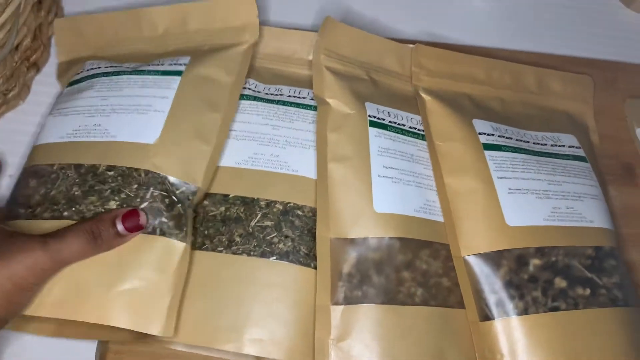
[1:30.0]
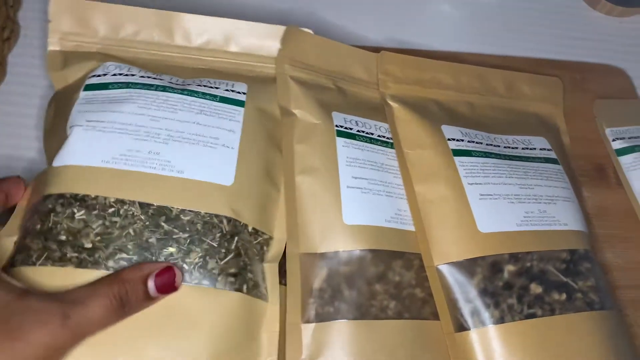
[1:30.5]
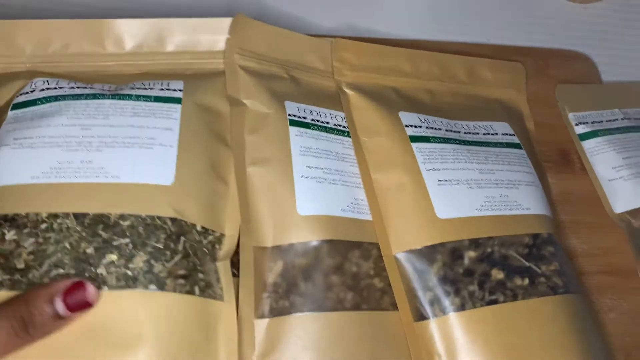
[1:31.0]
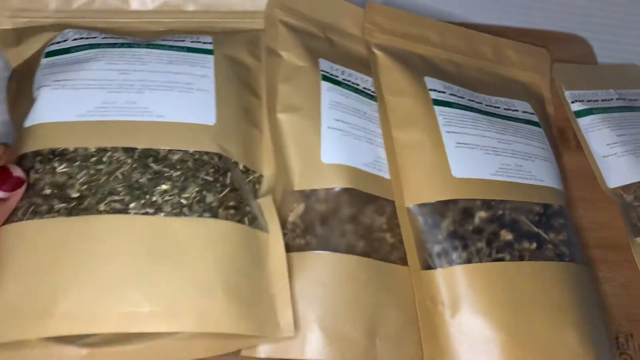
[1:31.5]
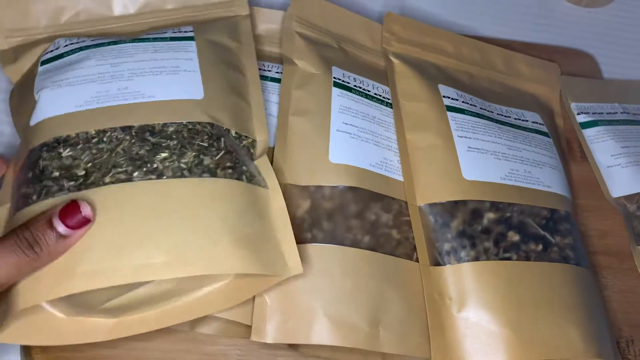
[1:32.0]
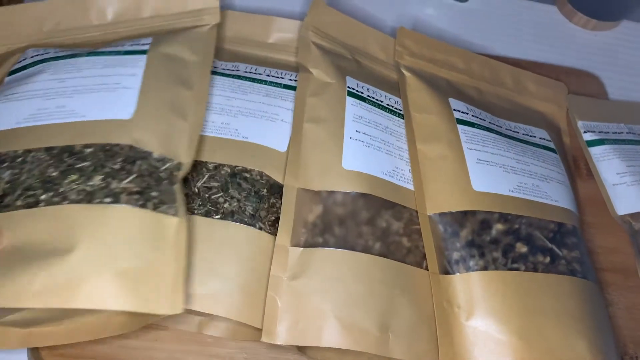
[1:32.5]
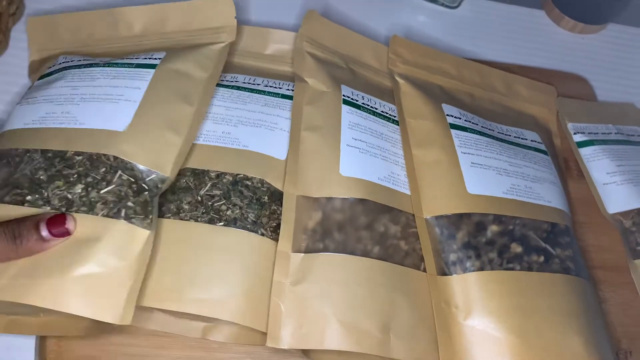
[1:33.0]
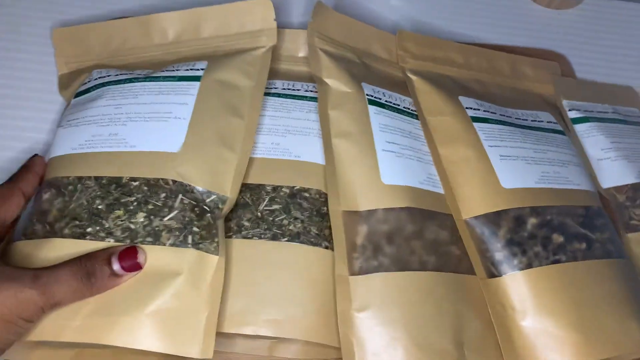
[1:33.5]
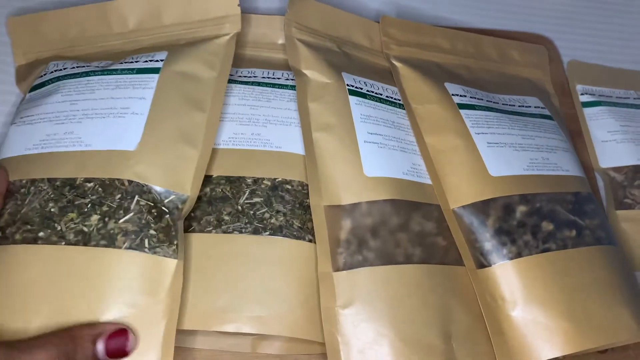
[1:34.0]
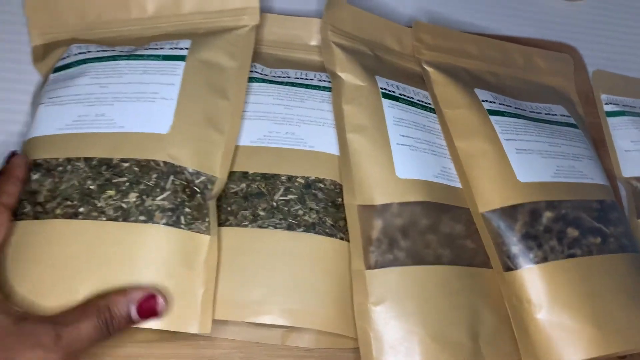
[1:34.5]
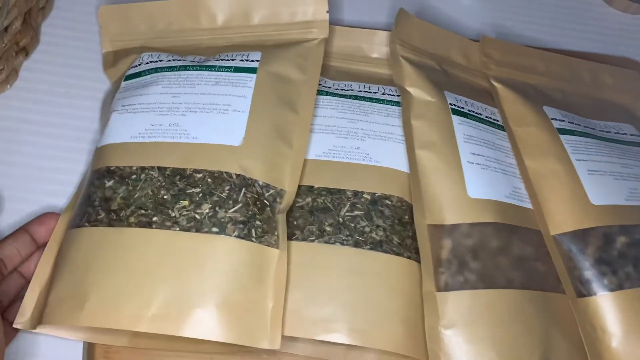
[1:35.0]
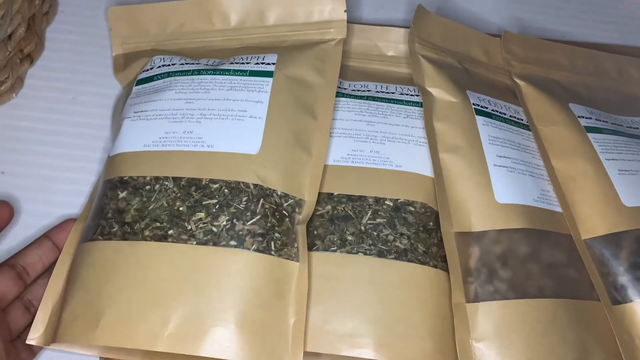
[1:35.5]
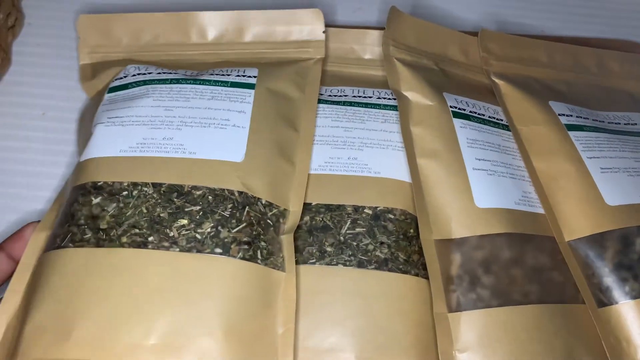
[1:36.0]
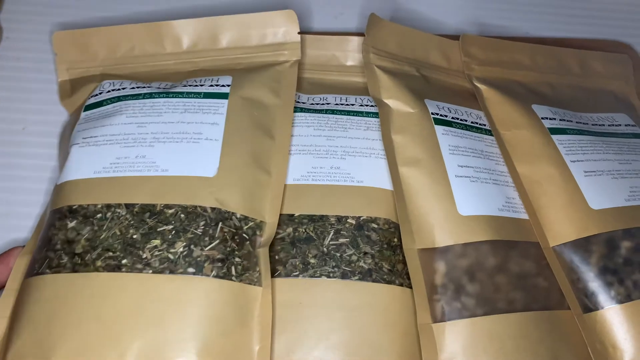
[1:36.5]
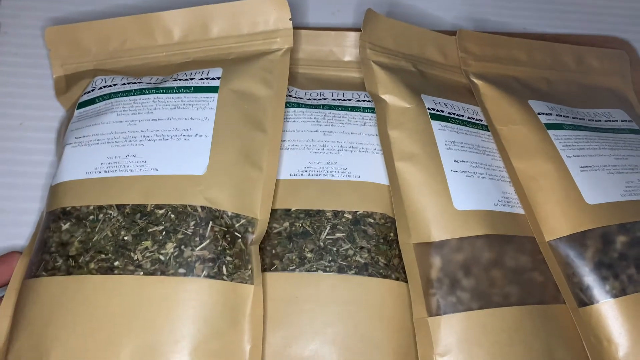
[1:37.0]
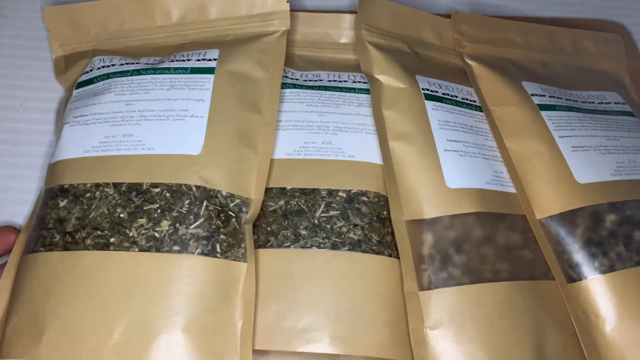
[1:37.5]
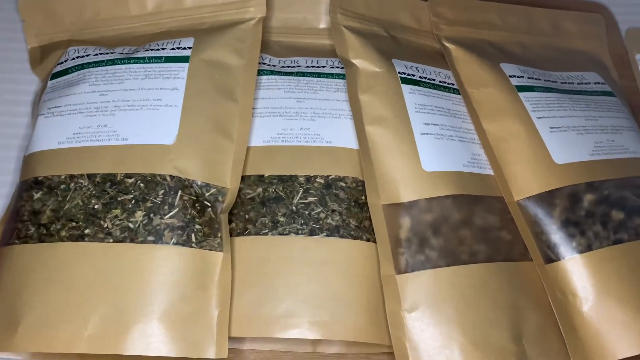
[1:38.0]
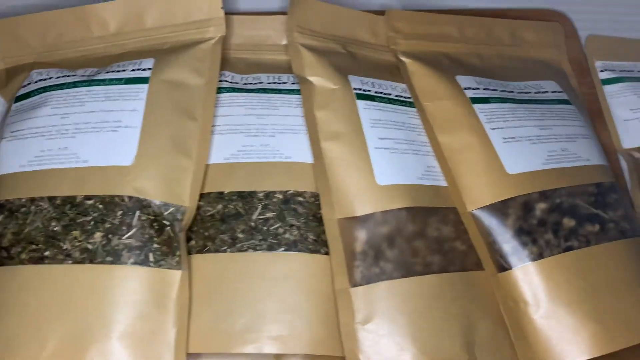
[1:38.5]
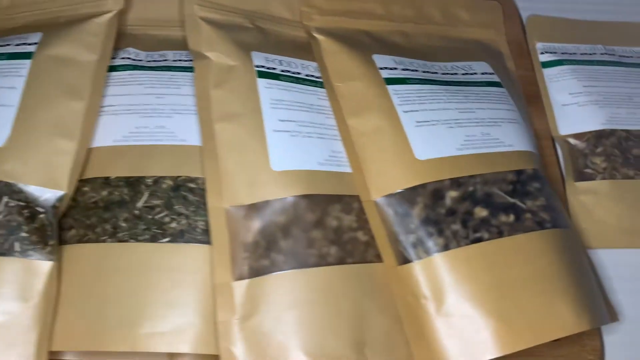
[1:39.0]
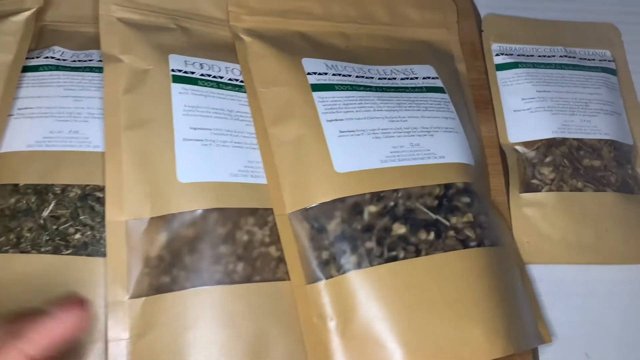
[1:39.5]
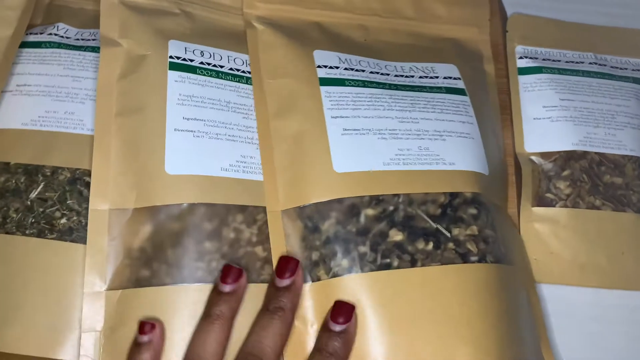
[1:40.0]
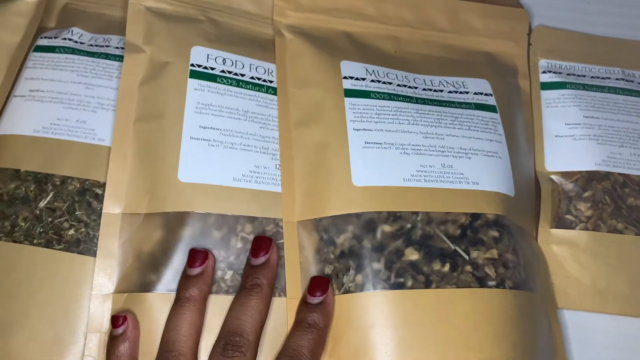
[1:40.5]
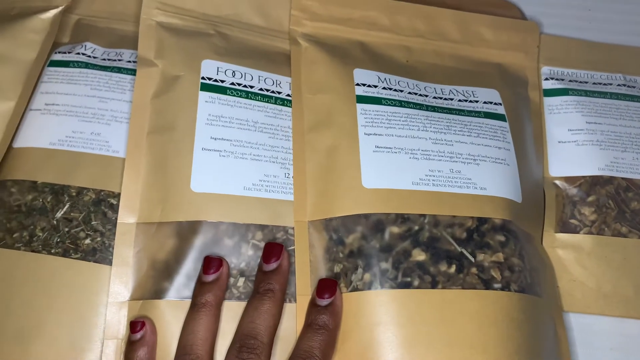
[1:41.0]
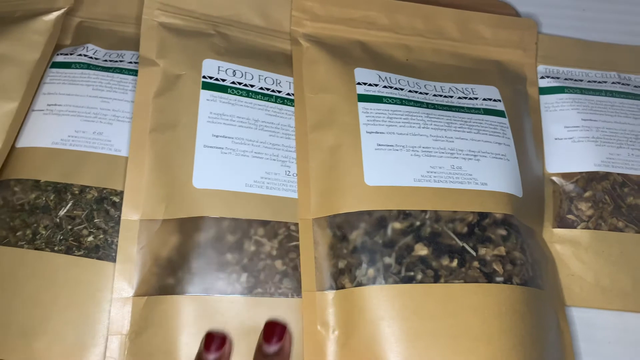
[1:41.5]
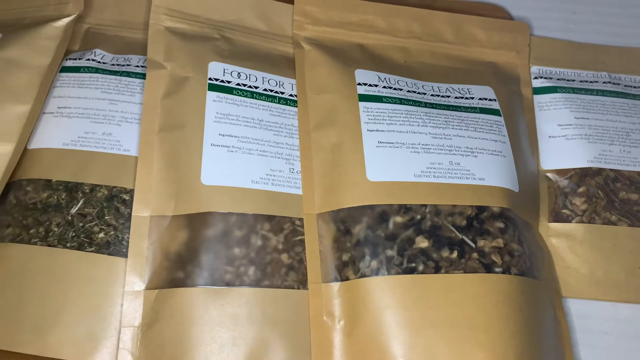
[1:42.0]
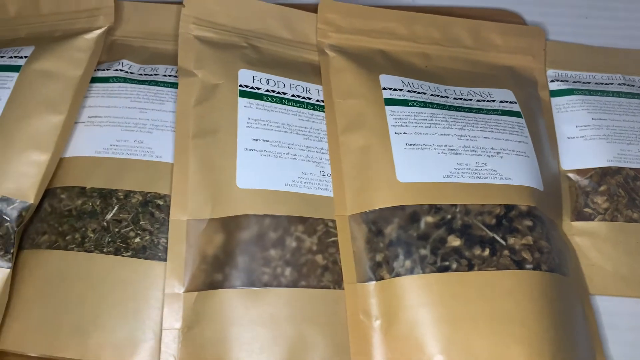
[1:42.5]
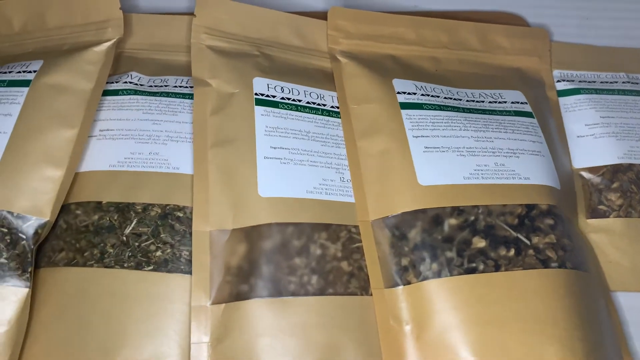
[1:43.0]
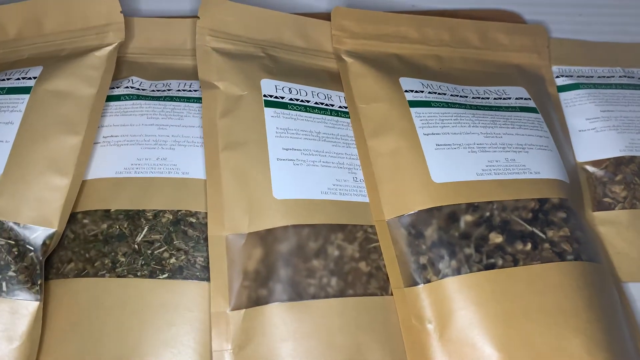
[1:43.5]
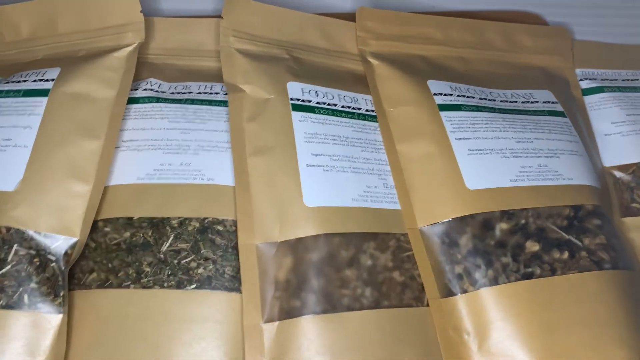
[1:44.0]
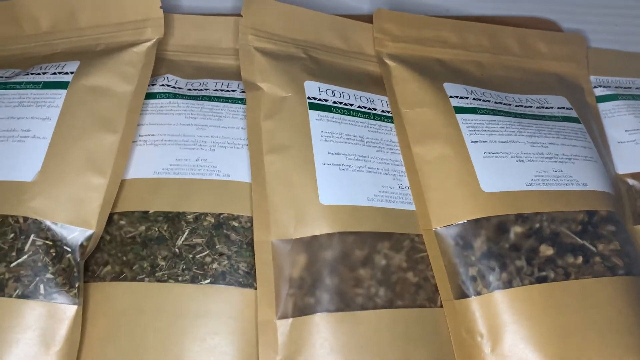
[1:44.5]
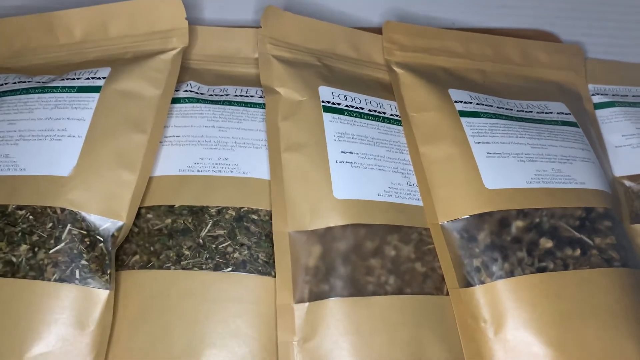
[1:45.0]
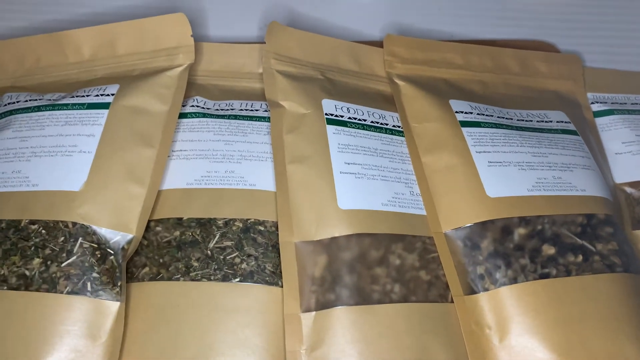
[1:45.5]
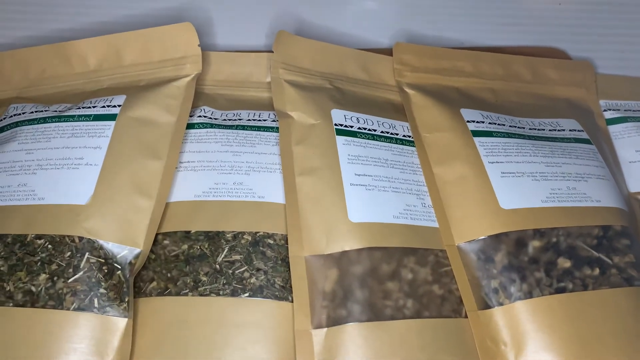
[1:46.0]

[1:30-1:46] The woman arranges the bags in an orderly manner, her hands positioning and straightening them. Five packets of different products are visible, with different contents. All five are khaki packages written in white and green, with white stickers written in black and green. The writing on the packages is not visible at this point. They are designed, labeled and packaged the same, though their contents look different. Nothing changes other than the woman's hands adjusting the packages.